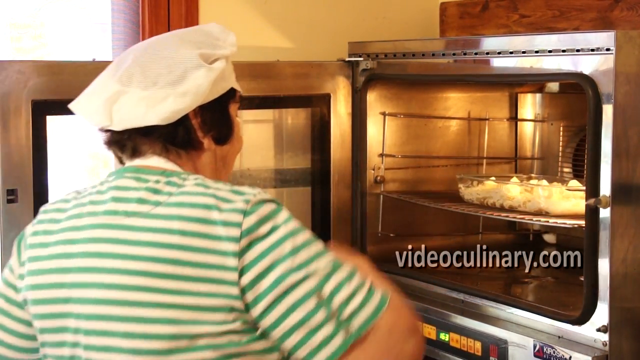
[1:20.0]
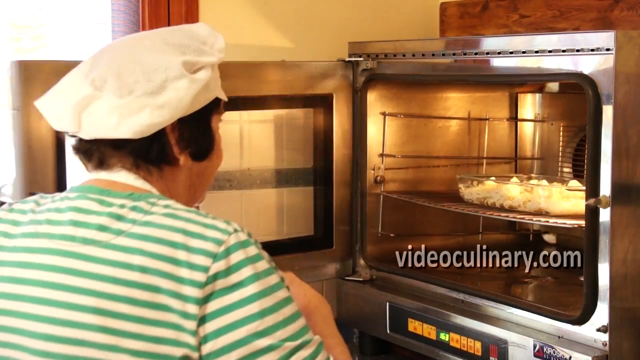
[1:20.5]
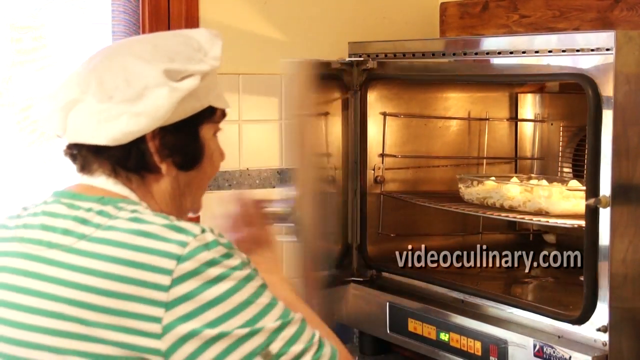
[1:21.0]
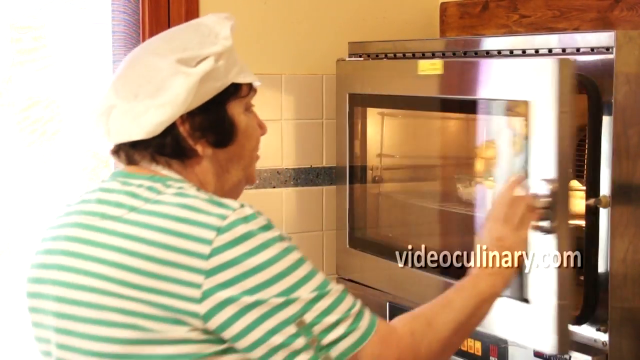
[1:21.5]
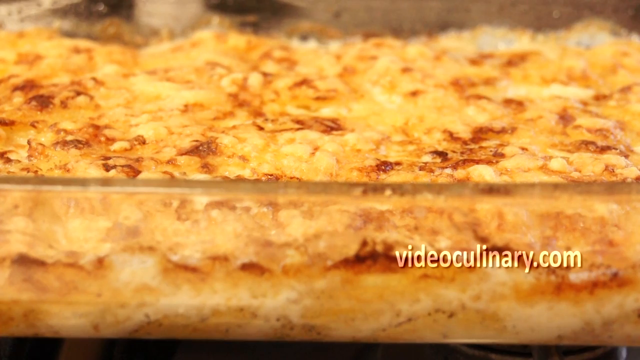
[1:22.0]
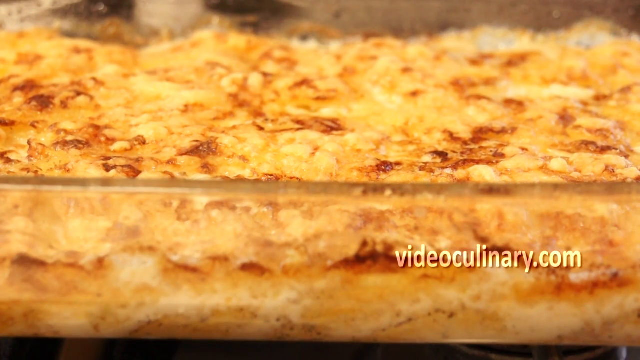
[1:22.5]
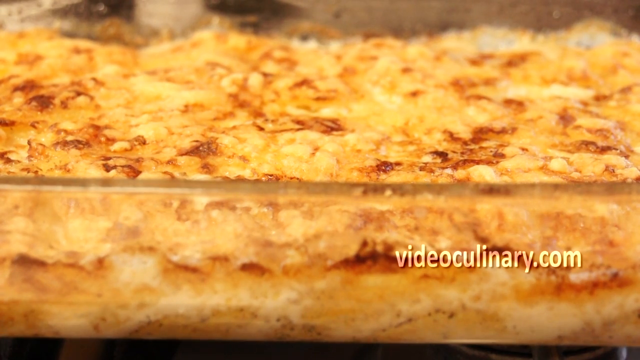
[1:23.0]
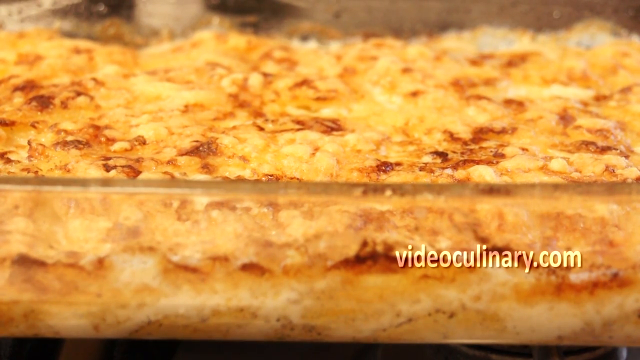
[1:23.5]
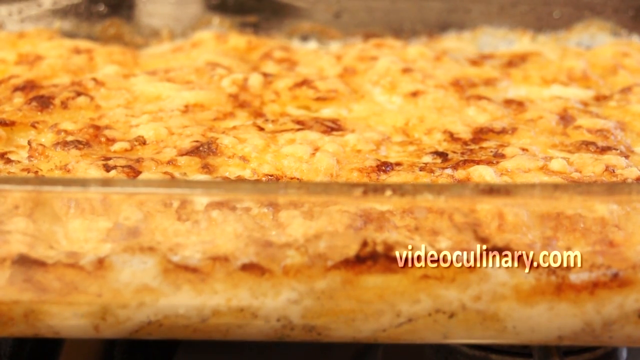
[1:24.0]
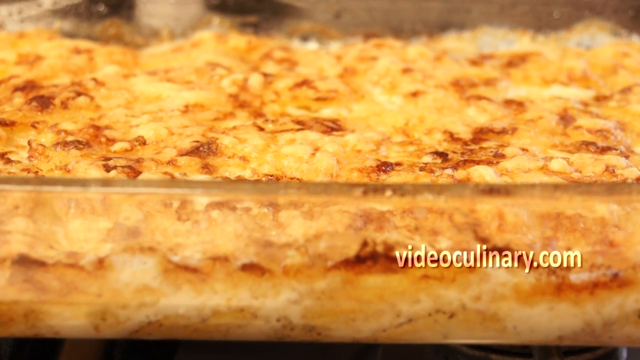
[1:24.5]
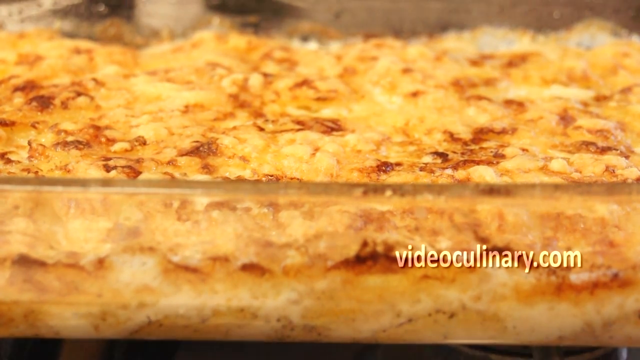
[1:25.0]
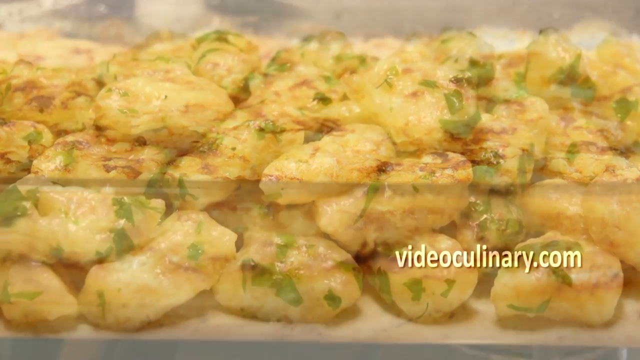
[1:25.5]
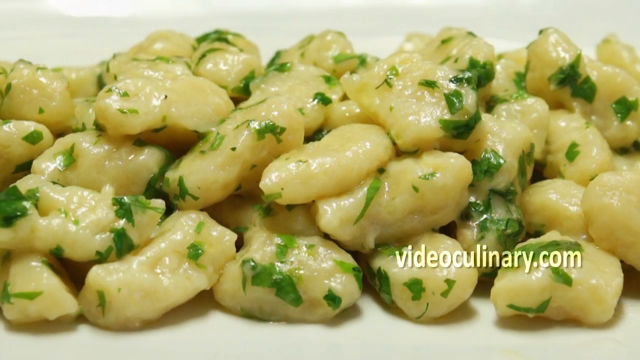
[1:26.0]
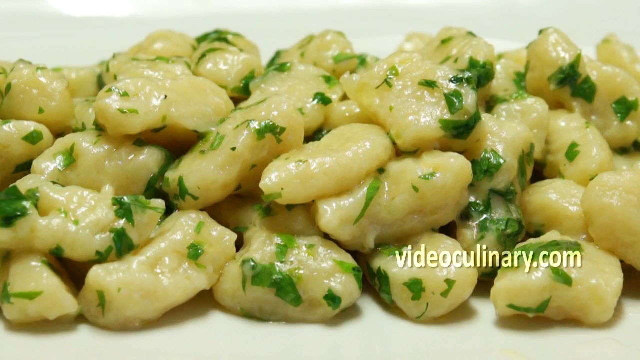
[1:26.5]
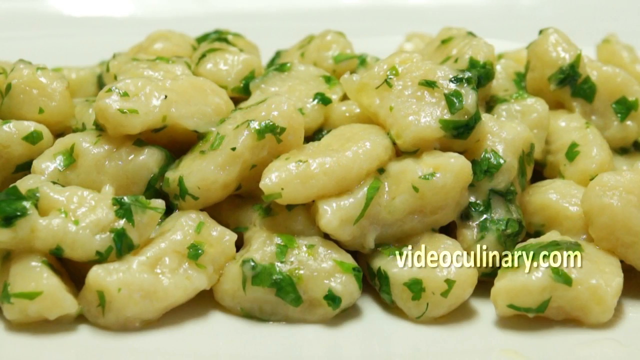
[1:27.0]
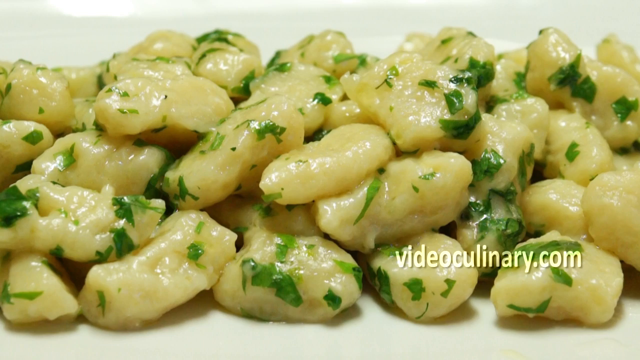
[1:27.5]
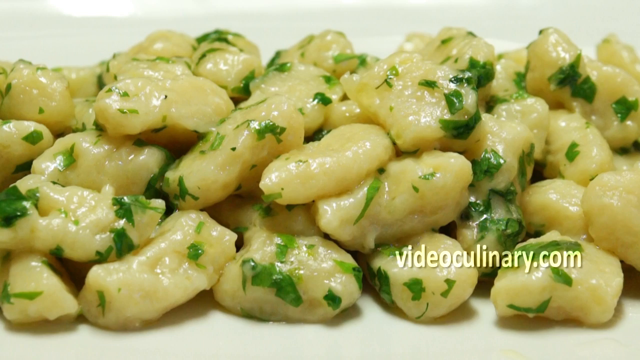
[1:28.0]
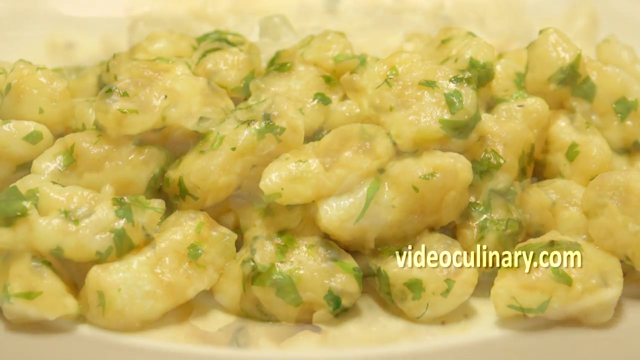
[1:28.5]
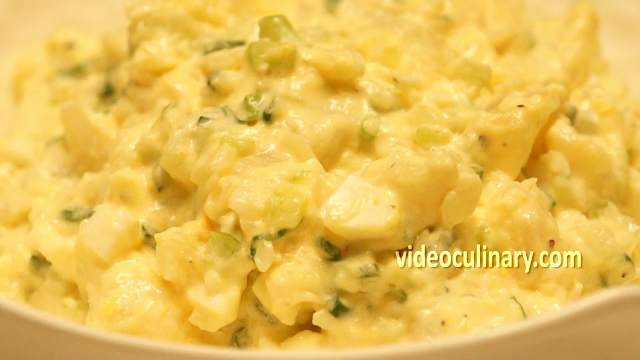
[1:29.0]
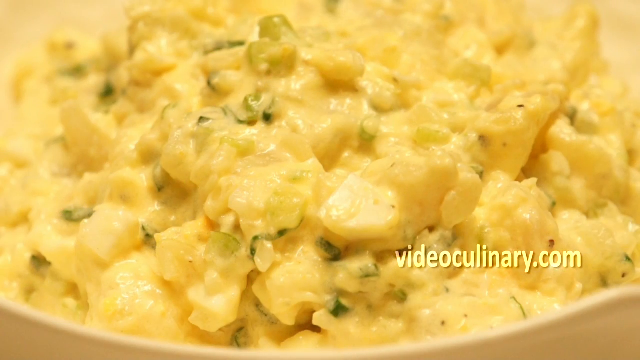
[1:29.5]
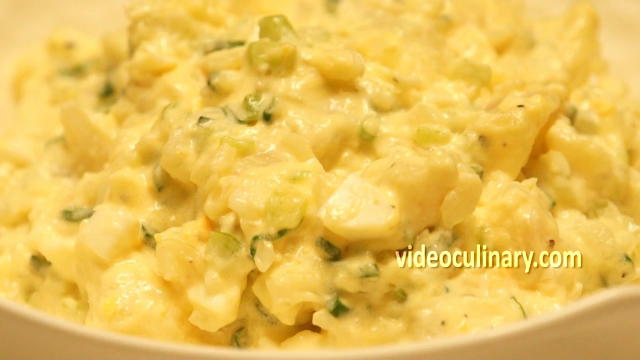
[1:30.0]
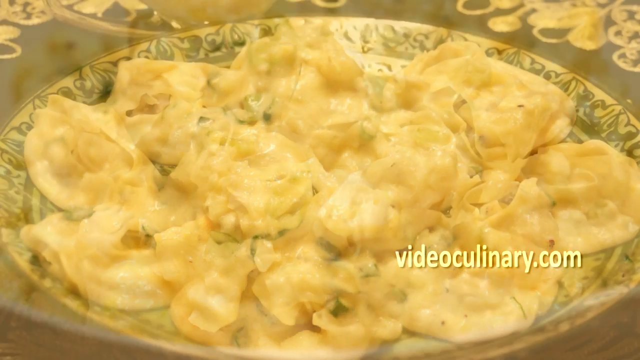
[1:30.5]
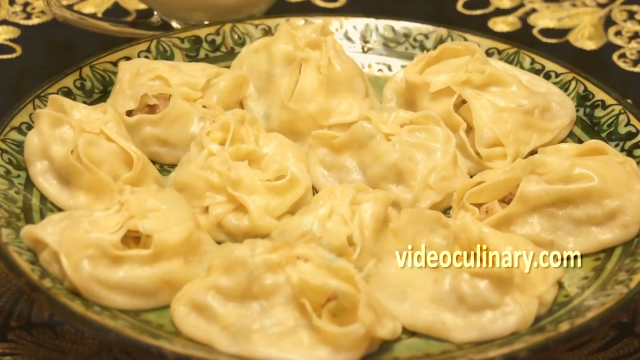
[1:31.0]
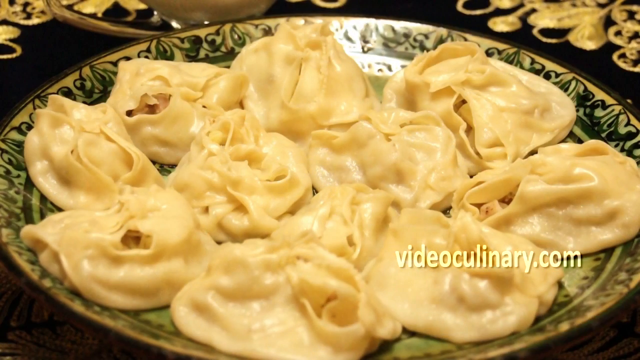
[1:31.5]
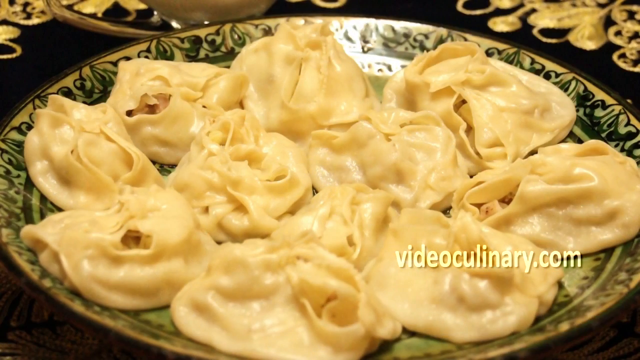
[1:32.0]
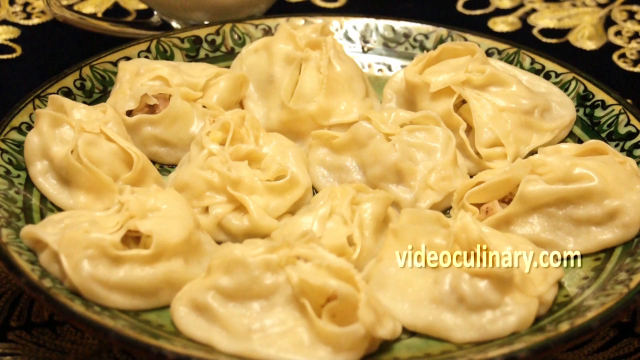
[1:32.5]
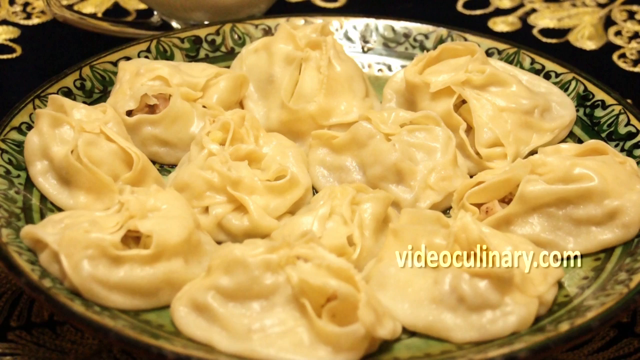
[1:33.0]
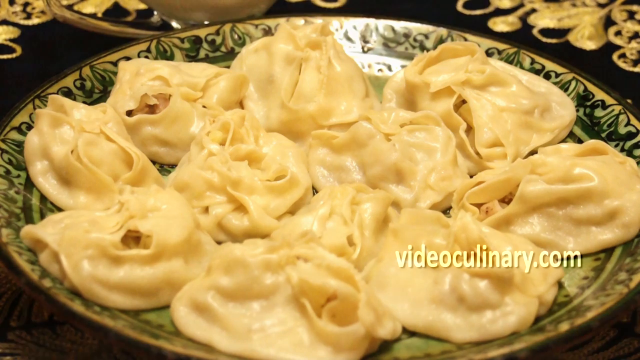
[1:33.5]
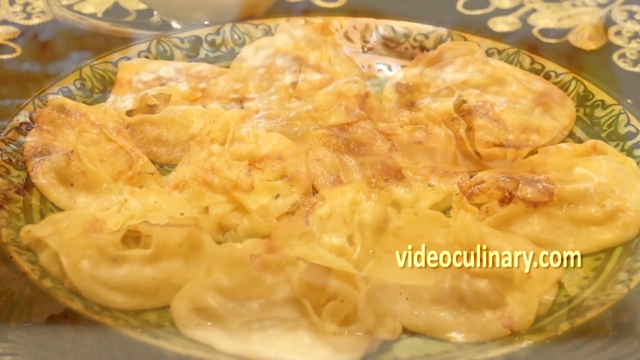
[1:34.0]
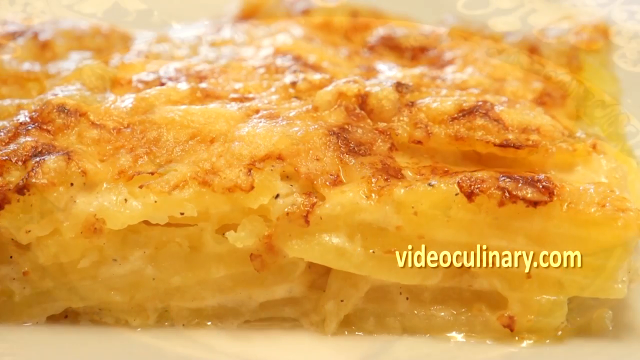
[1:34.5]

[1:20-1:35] A woman is seen from behind, wearing a white hat and a green and white striped shirt, standing in front of an open oven with a bowl of potato gratin on the tray inside. She takes the door and closes the oven, making sure it is shut. The shot cuts to the potato gratin in the glass bowl, its surface yellowish but also brownish, showing it after it has cooked for a bit, with "videoculinary.com" on the bottom right of the screen. Another dish appears, unidentified: a pile of little shiny, yellowish things that almost look like beans or pasta, with small green herbs dispersed all over them. Another shot shows what looks like another very yellow potato dish, with maybe little bits of green onions in the potatoes. A further-out shot shows a dish that looks like wontons, little pasta things resembling wontons or pot stickers, on a decorative bowl. Then a close-up shows the potato gratin, brown on the top and more yellow toward the bottom.